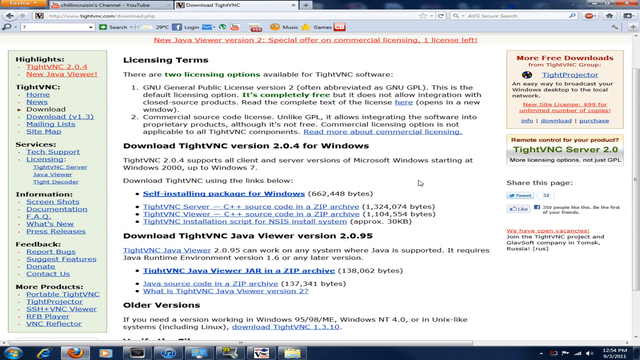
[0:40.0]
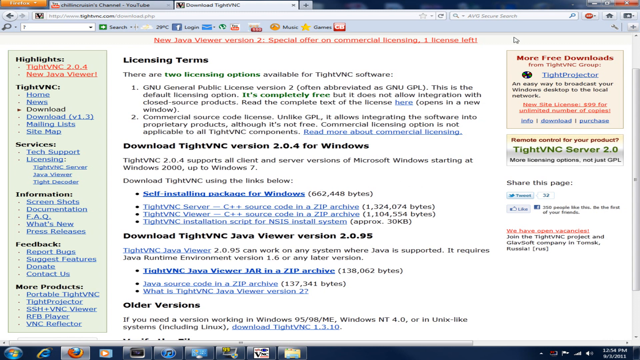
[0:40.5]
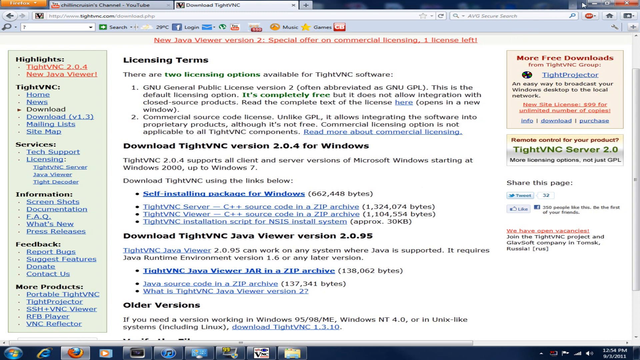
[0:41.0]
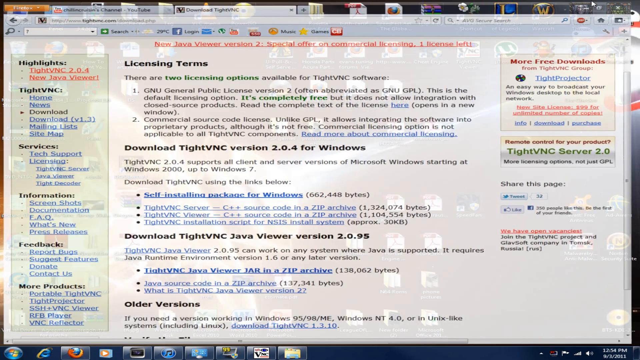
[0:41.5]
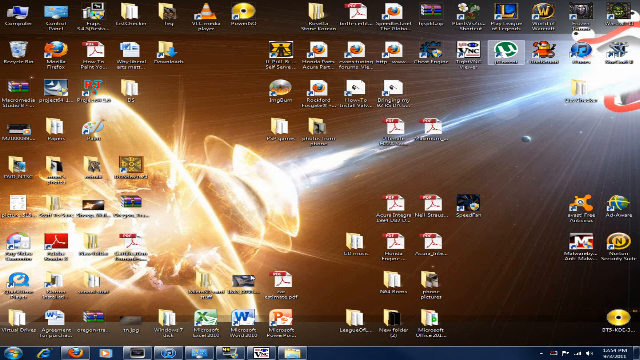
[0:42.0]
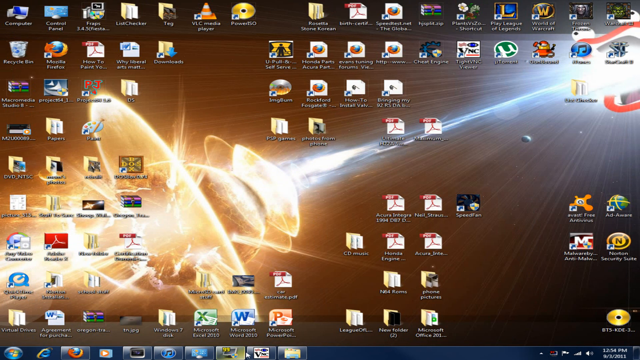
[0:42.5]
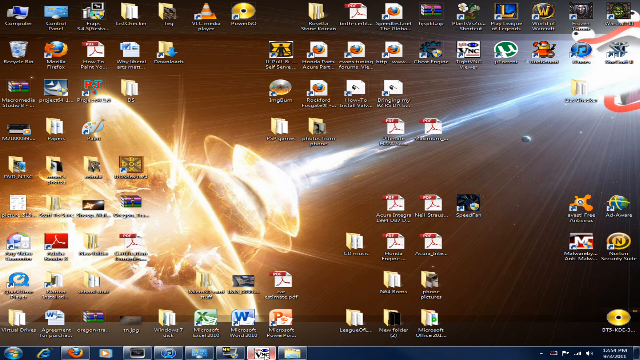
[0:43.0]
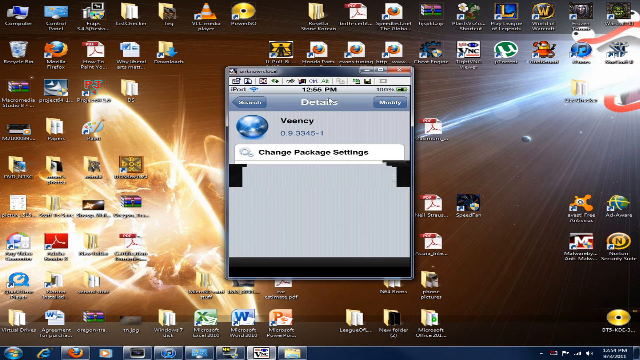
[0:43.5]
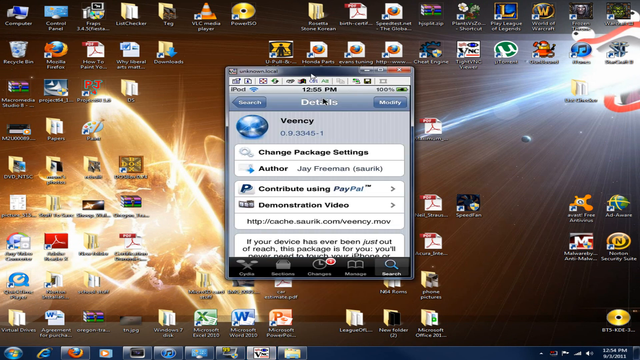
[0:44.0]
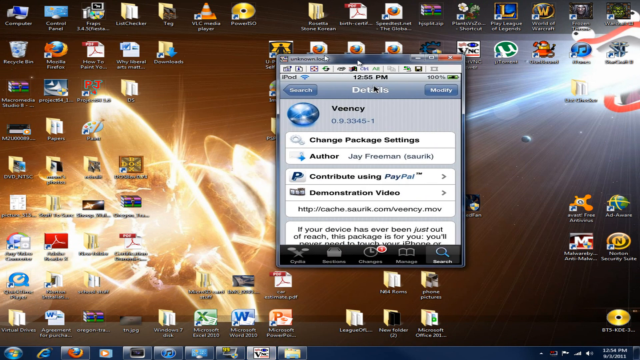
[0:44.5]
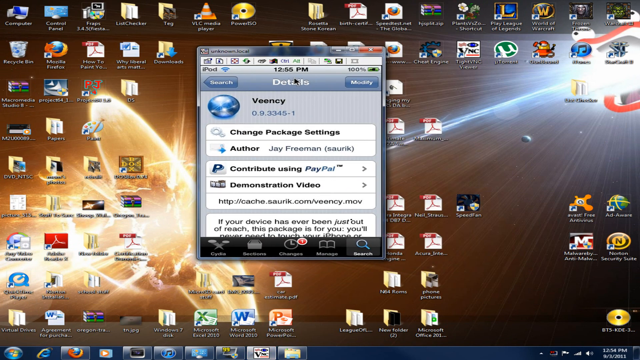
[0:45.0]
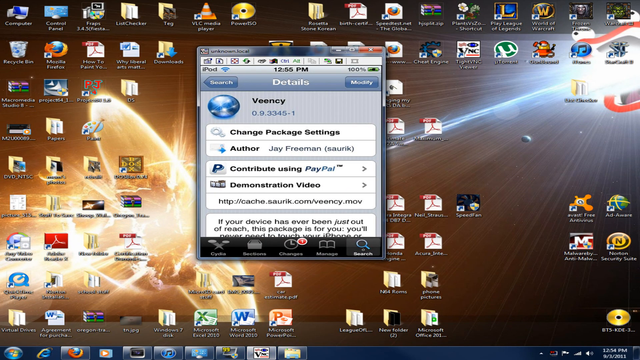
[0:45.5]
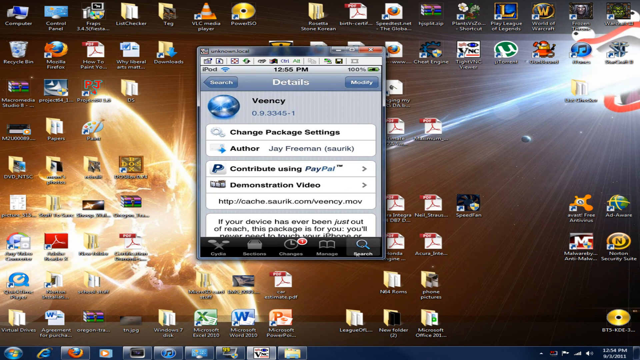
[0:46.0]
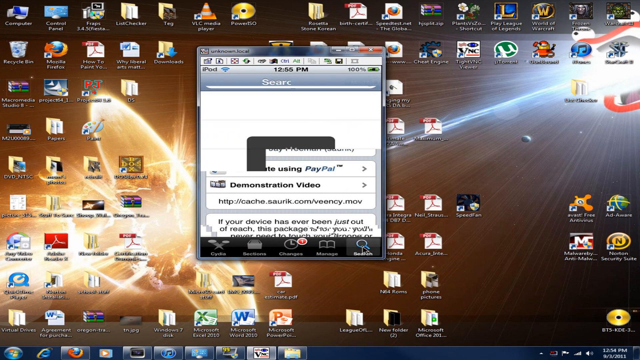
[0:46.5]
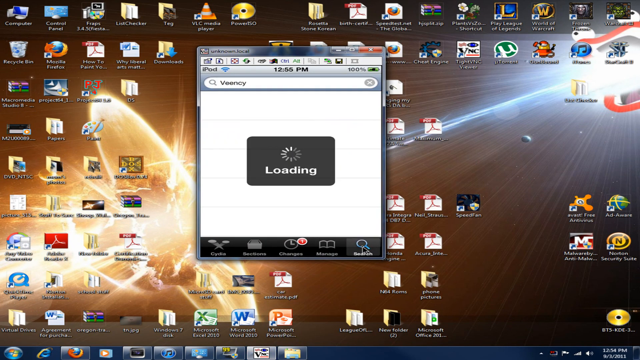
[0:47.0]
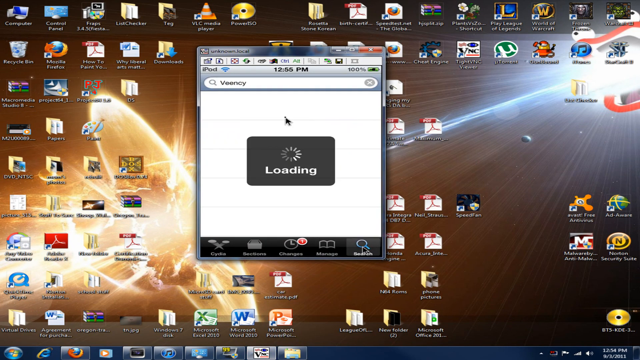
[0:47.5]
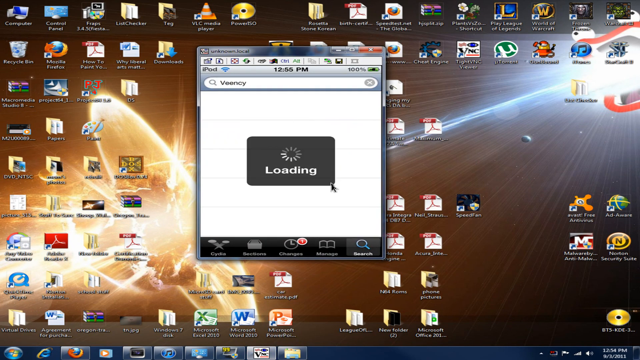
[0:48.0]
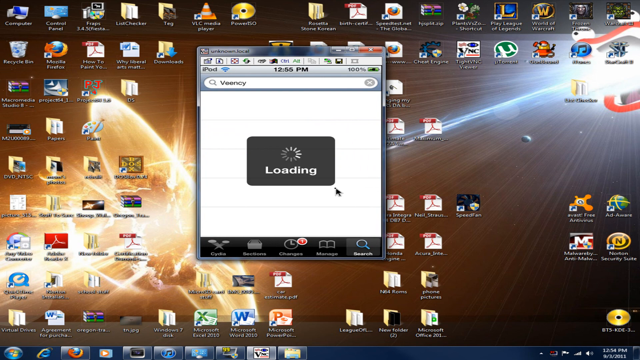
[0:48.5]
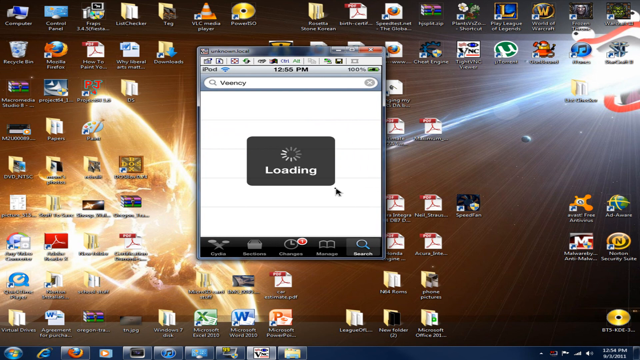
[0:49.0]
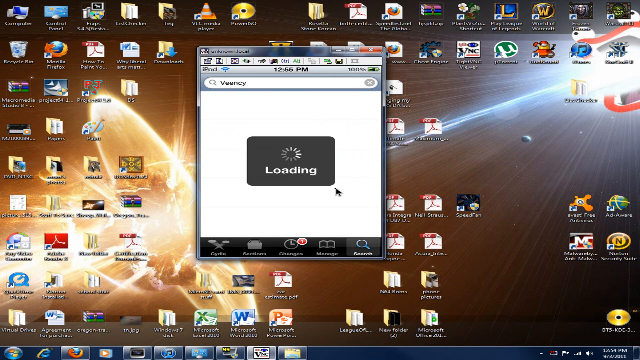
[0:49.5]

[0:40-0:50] A computer screen shows a wallpaper of a bright yellow planet that looks to be crashing into another planet. There are about 50 to 60 icons on the screen. The mouse pointer clicks on one of the icons, and a small pop-up screen appears. At its top it says "Veency", and it lists "change package settings", "author", "contribute using PayPal" and "demonstrate video". He moves the pop-up screen around.